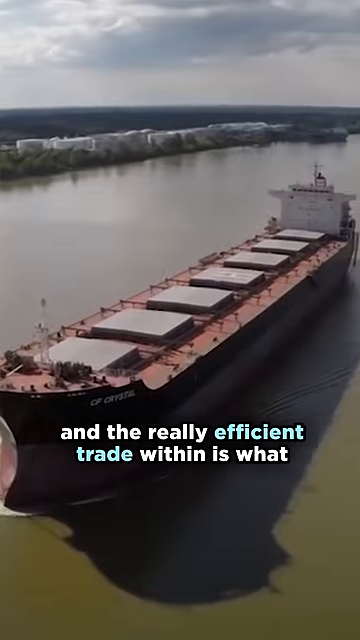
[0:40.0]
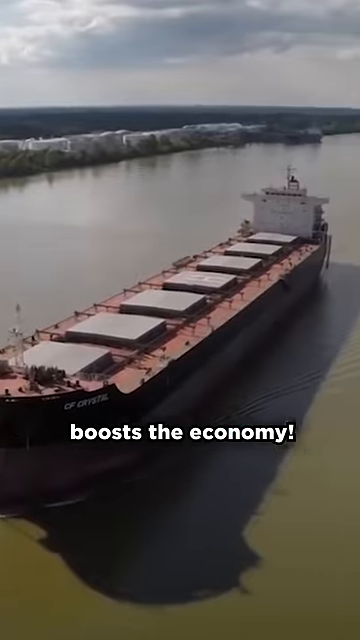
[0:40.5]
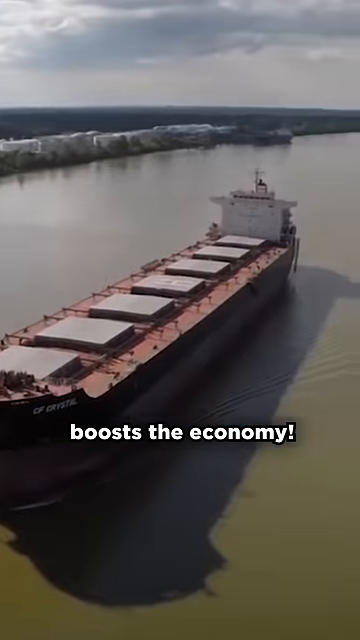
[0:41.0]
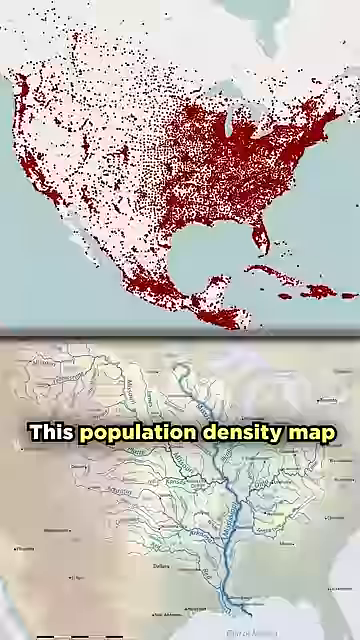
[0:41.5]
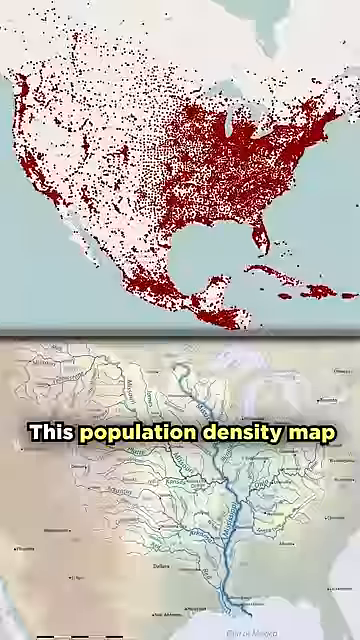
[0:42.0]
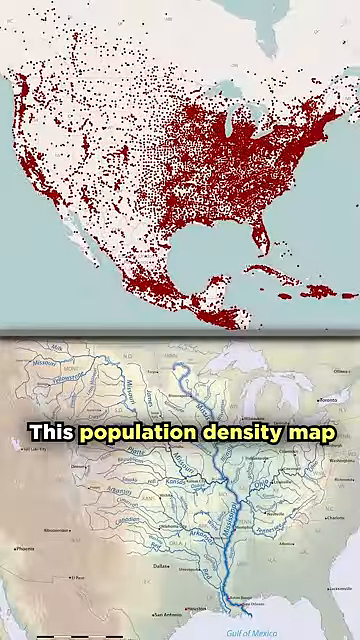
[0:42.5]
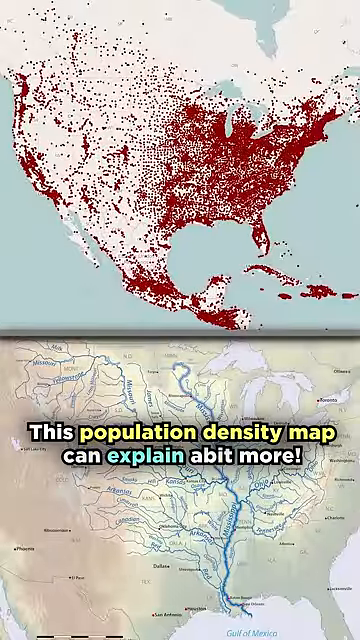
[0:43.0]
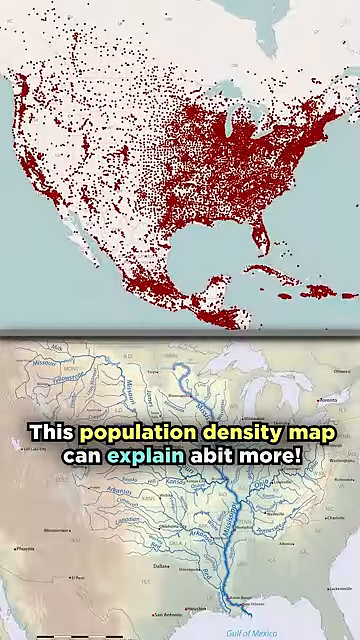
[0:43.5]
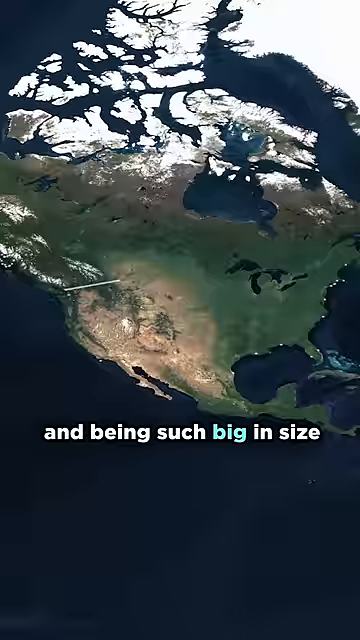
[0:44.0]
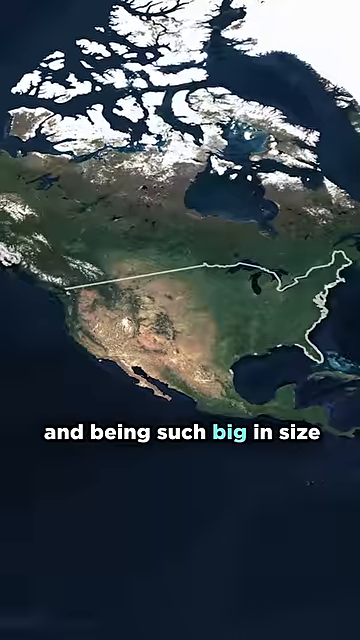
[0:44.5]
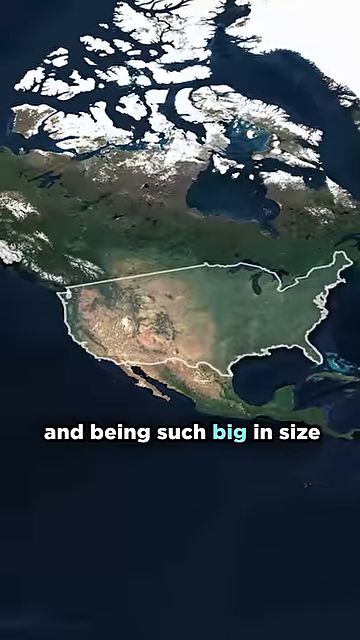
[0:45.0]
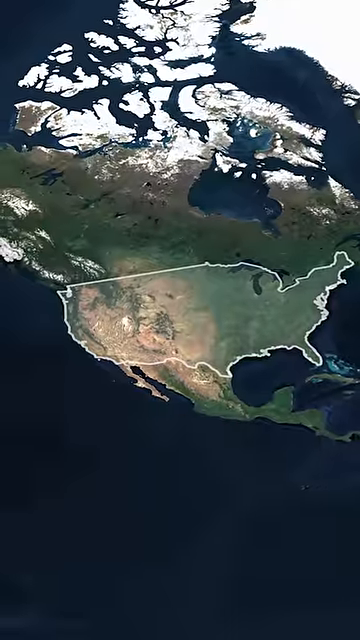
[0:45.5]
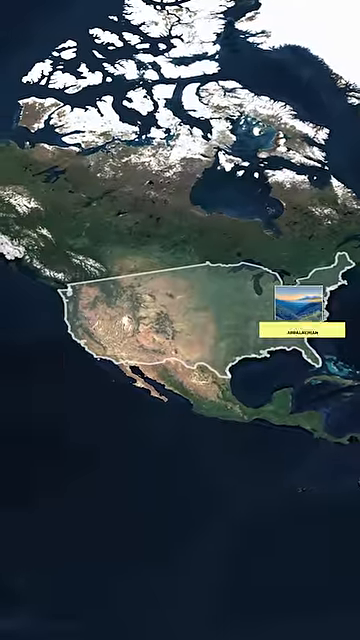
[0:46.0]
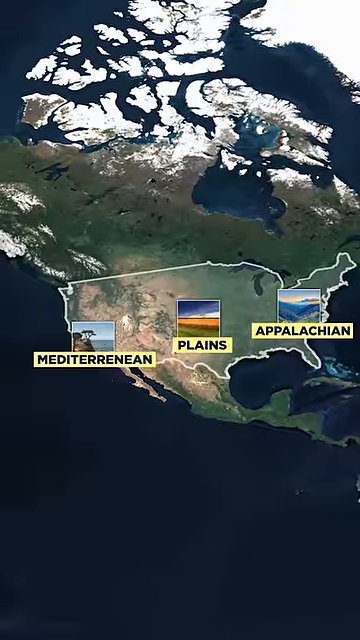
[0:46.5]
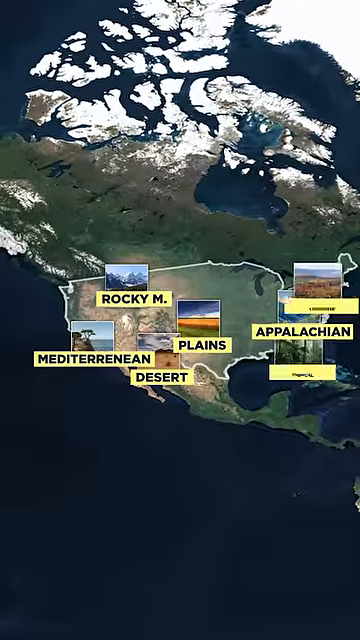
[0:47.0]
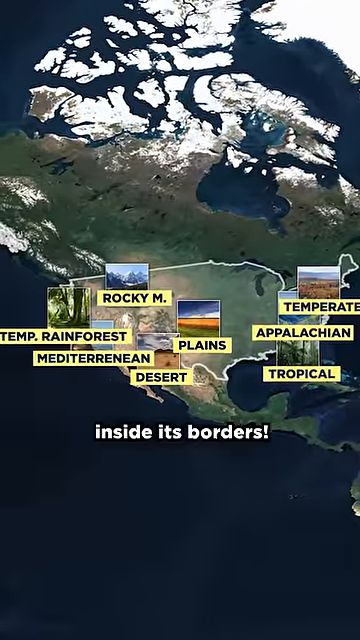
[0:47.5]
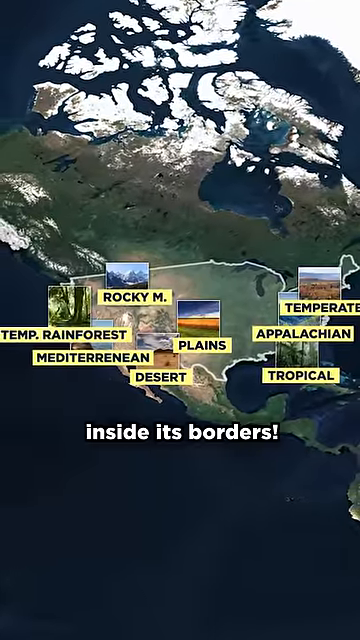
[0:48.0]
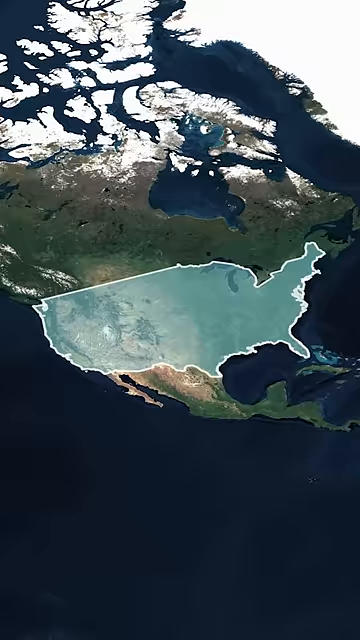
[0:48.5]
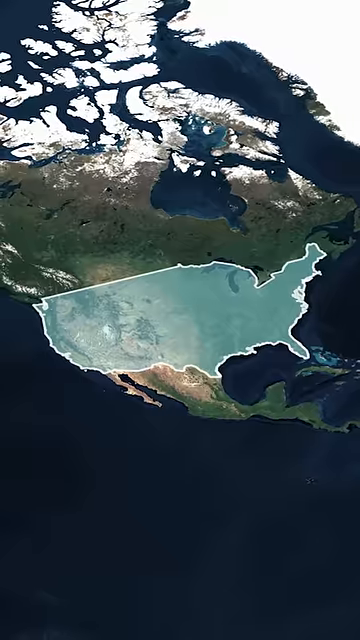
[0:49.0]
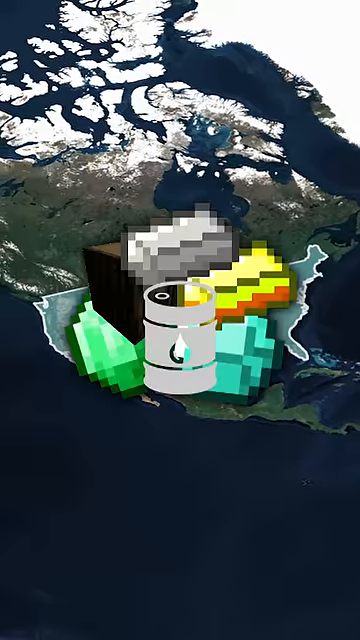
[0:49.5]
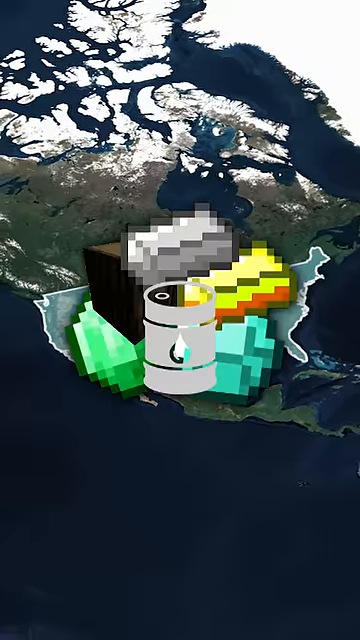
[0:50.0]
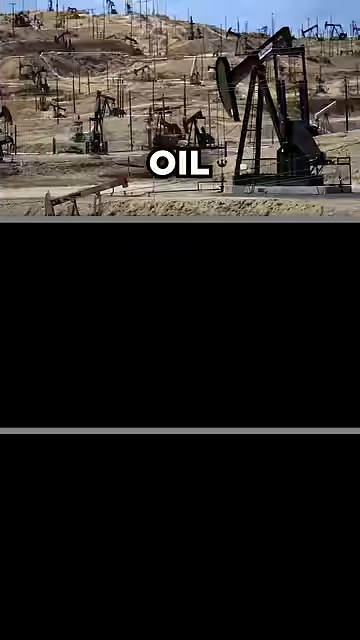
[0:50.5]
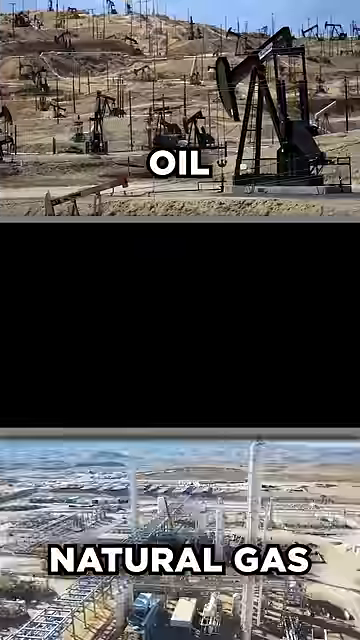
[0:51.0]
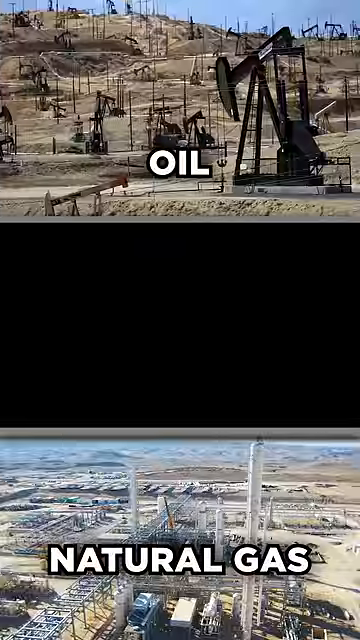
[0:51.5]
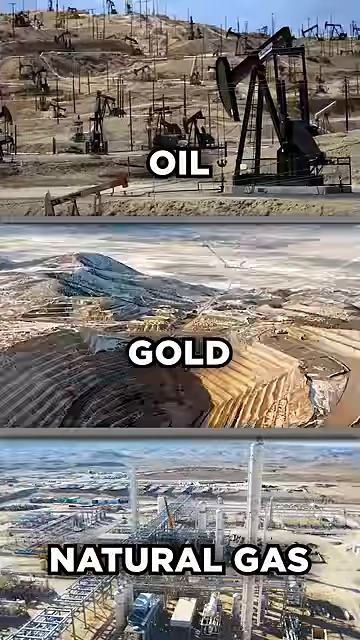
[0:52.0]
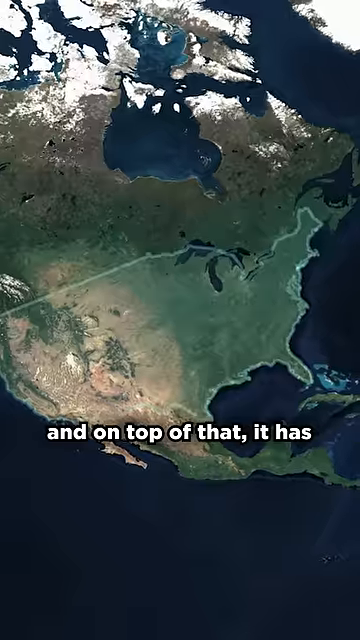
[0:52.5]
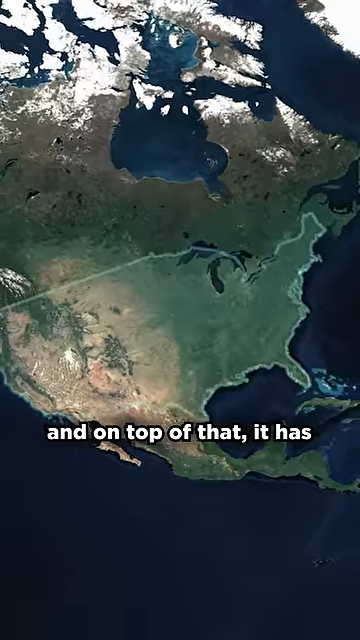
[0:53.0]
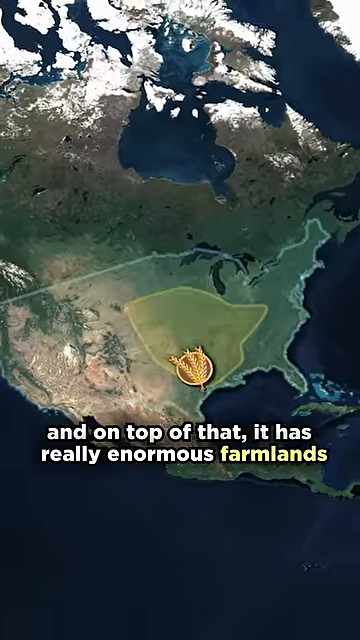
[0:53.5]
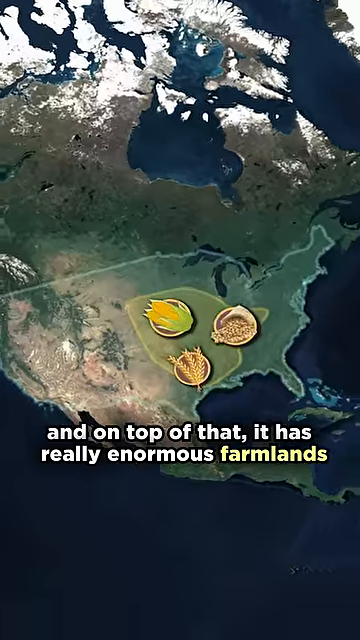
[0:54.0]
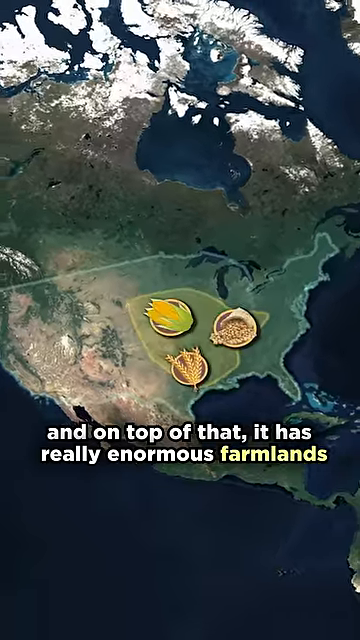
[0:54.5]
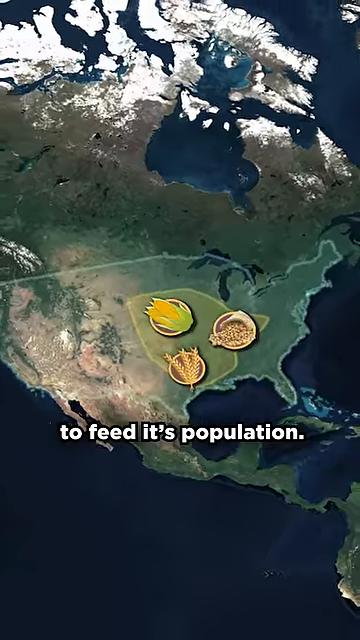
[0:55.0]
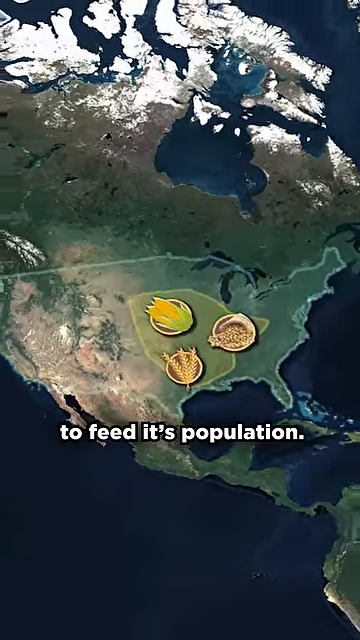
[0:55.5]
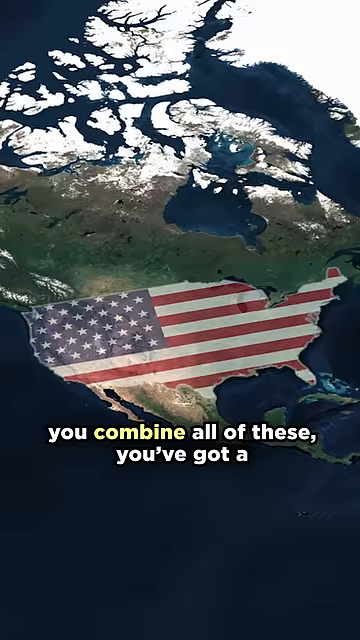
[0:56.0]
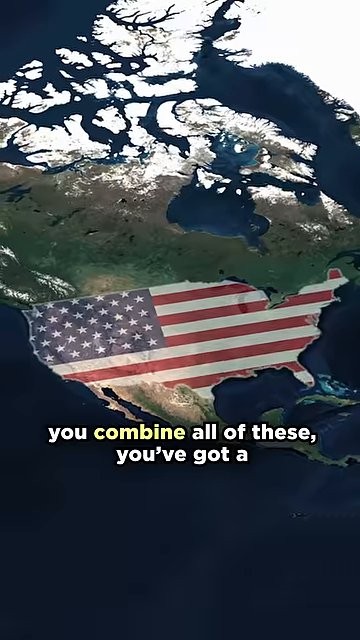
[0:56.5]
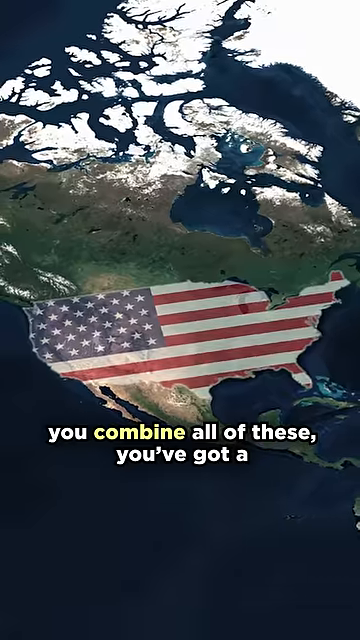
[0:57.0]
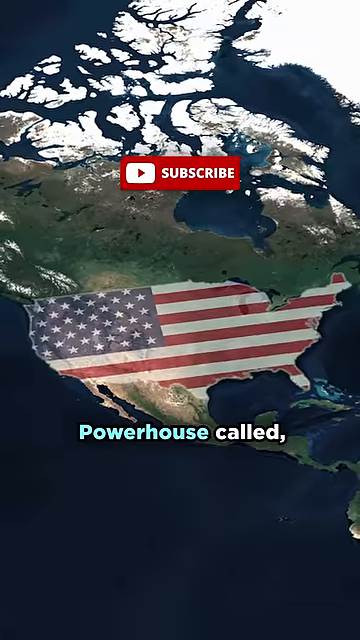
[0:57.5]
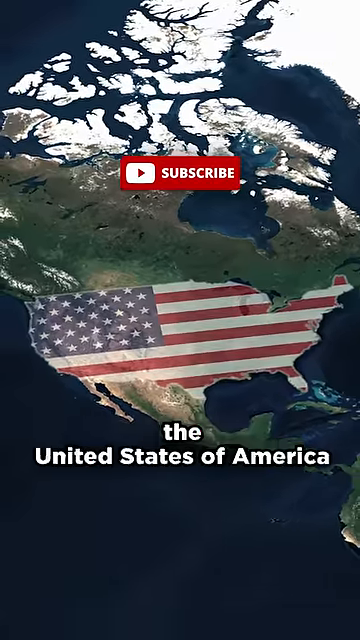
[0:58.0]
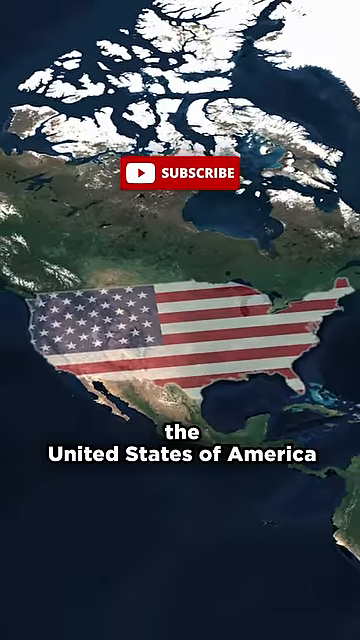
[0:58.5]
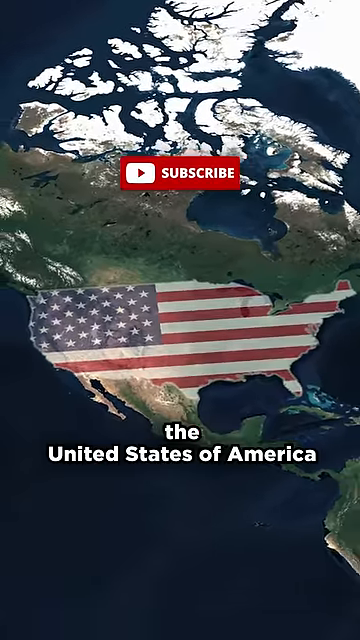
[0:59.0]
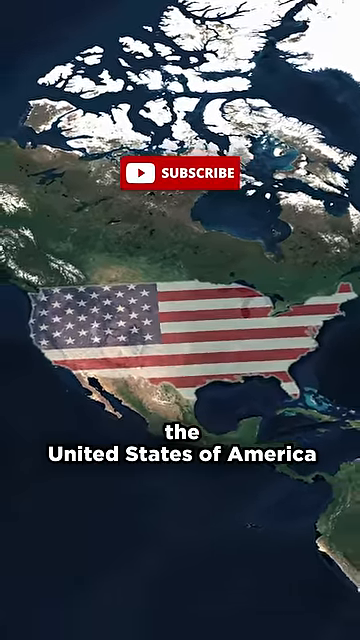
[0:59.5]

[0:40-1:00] A map of the United States has narrated text on top of it. Oil, gold and food are shown as commodities of the U.S. Different versions of the U.S. map indicate different aspects to be highlighted, including various common travel destinations, and the focus temporarily turns to the economy. The shot is vertical throughout, so it is likely filmed on a phone, with black on the left and right-hand sides of the scene. A circular purple logo is in the bottom right-hand corner.